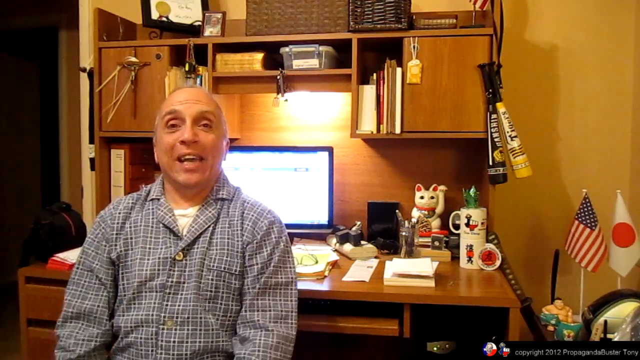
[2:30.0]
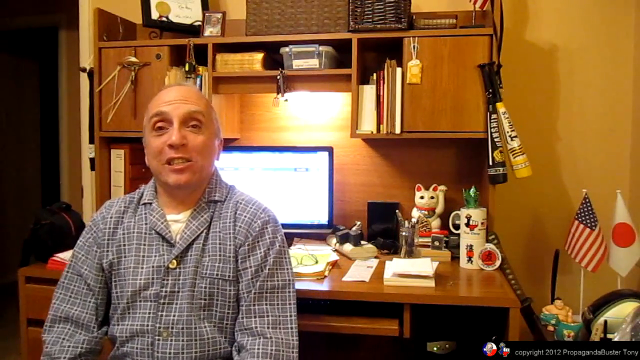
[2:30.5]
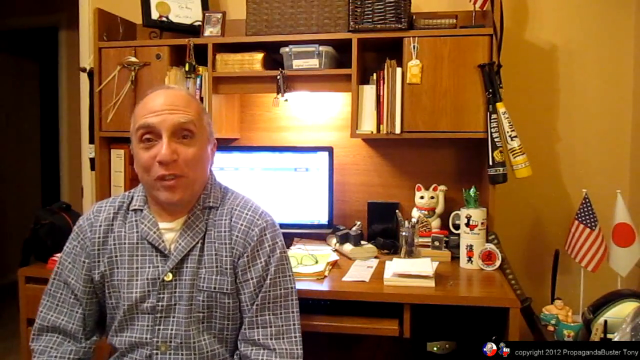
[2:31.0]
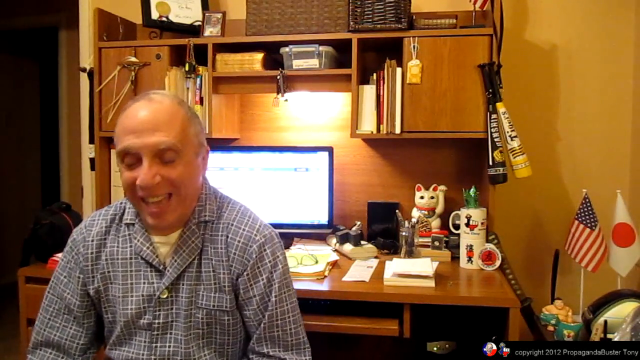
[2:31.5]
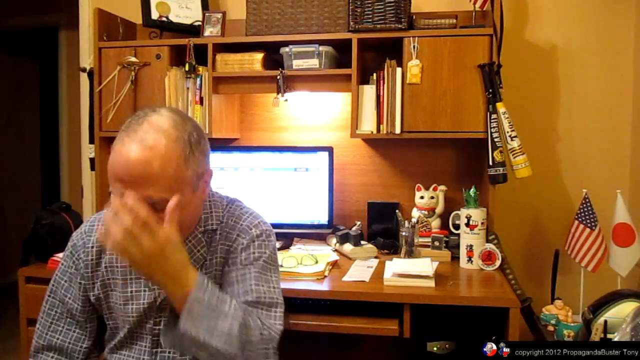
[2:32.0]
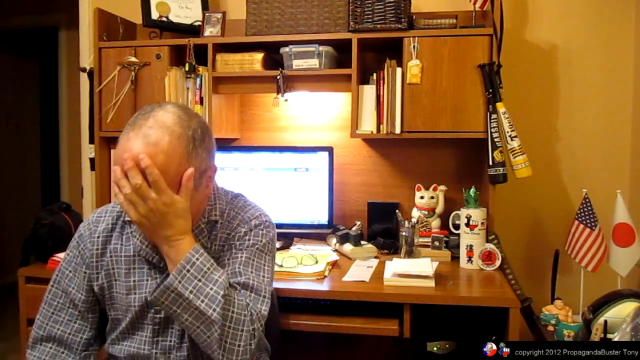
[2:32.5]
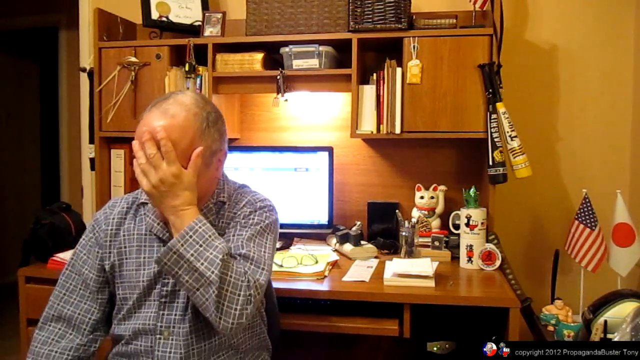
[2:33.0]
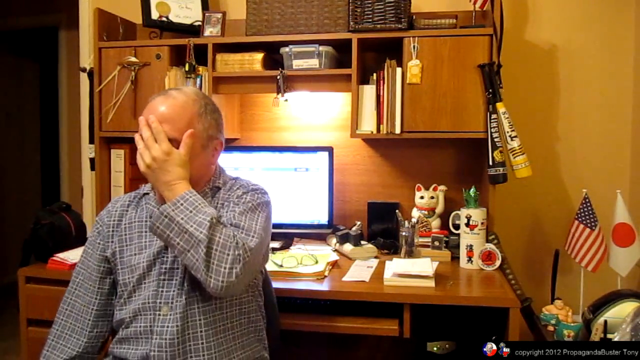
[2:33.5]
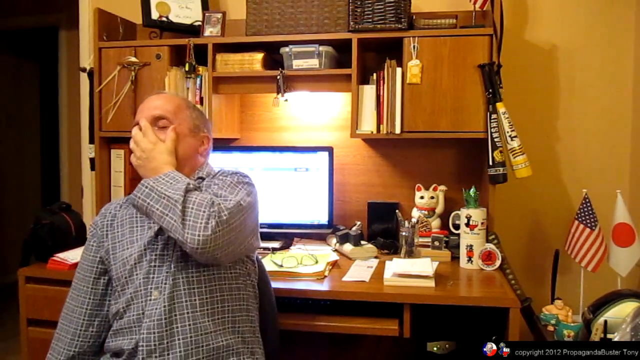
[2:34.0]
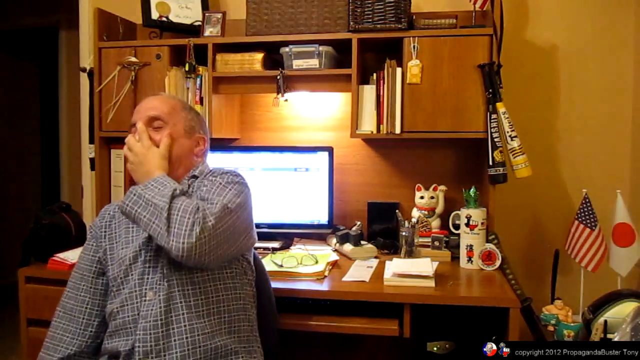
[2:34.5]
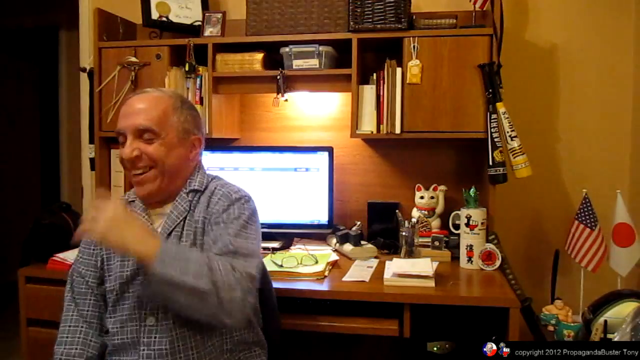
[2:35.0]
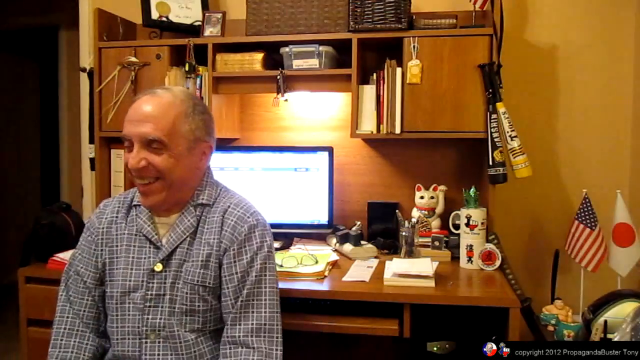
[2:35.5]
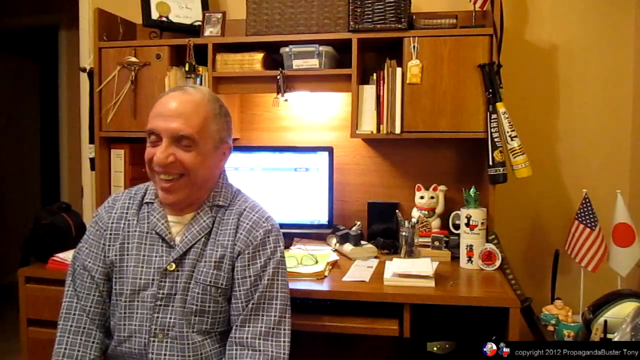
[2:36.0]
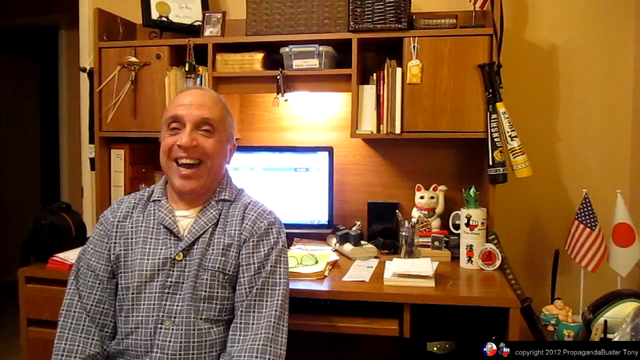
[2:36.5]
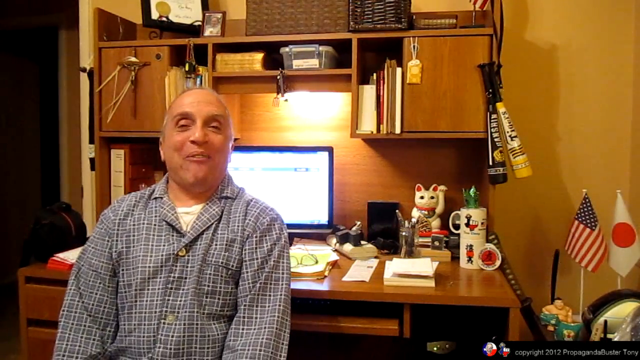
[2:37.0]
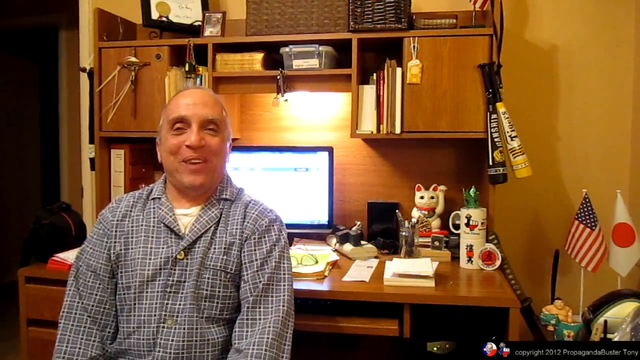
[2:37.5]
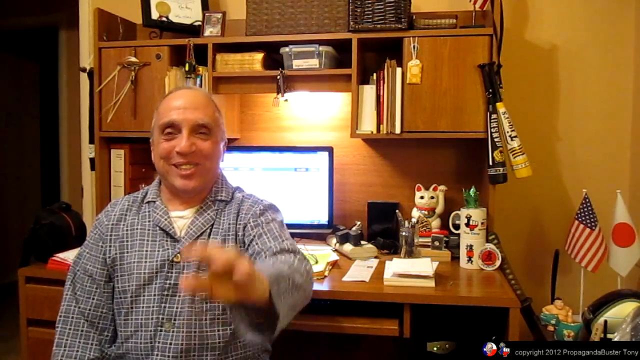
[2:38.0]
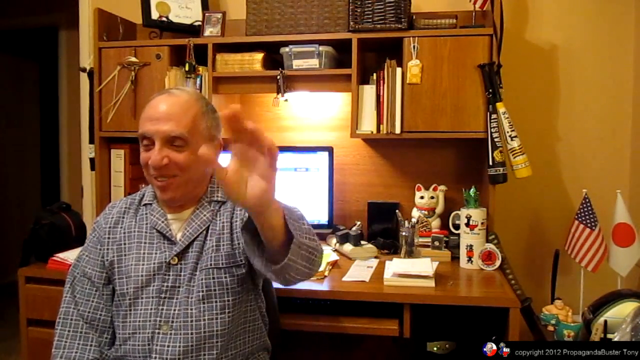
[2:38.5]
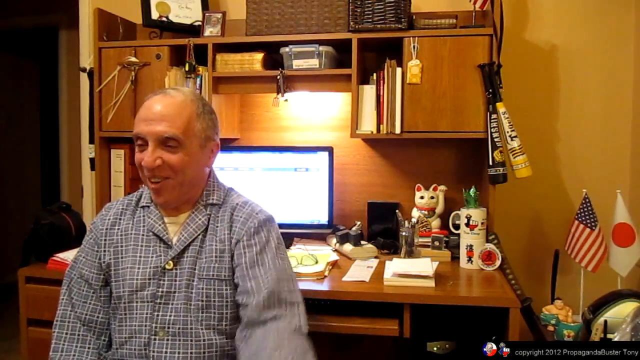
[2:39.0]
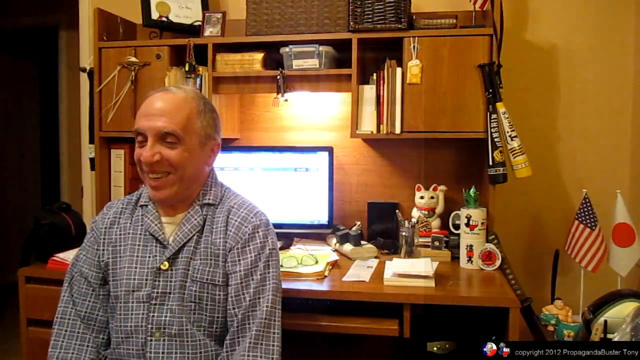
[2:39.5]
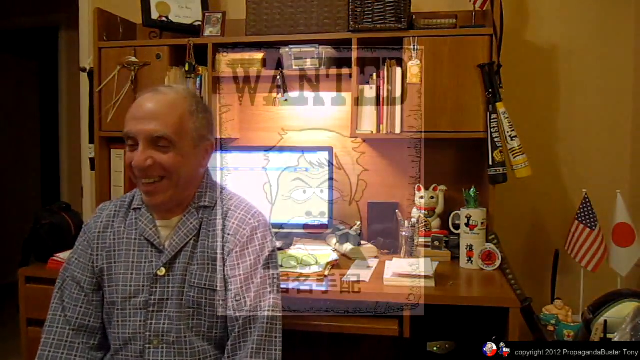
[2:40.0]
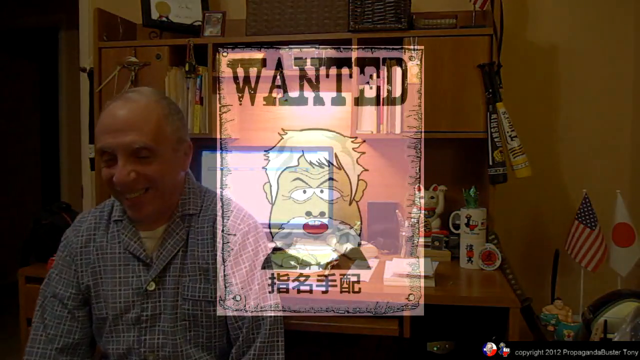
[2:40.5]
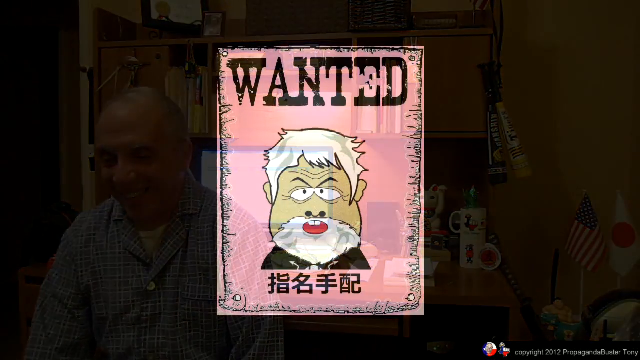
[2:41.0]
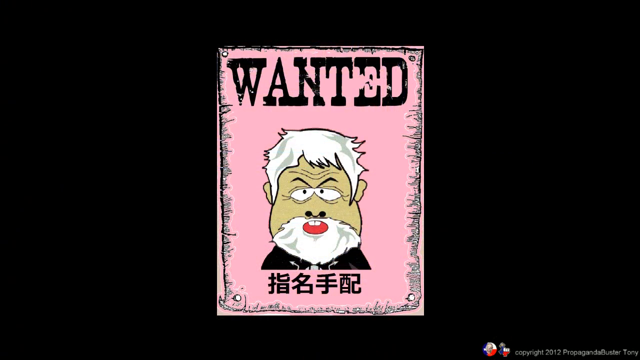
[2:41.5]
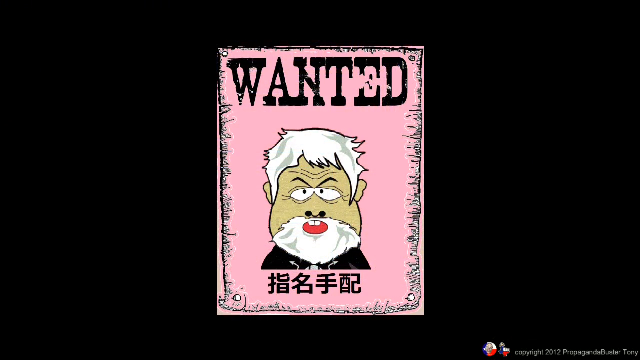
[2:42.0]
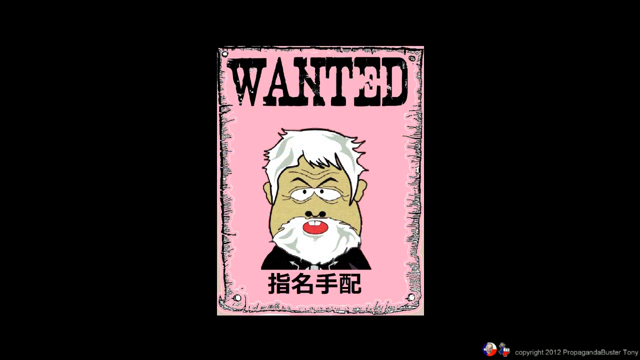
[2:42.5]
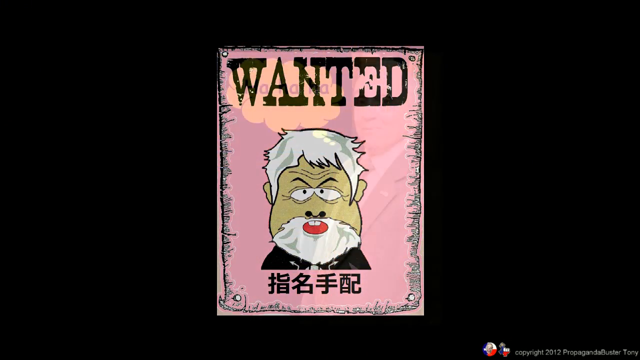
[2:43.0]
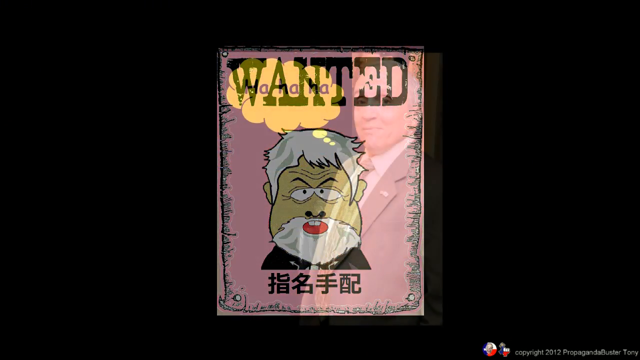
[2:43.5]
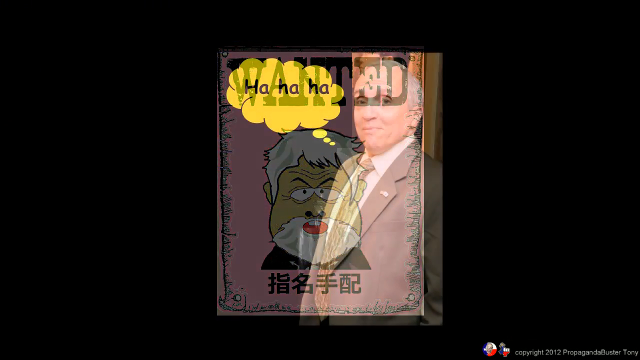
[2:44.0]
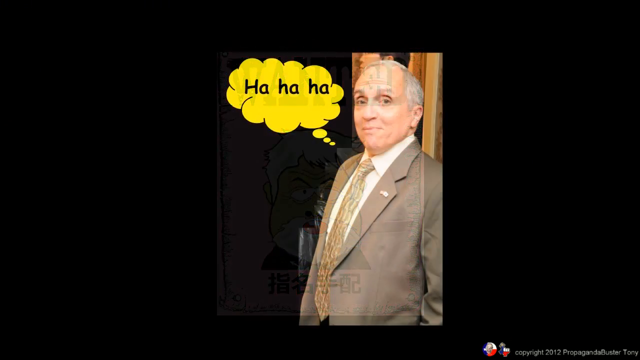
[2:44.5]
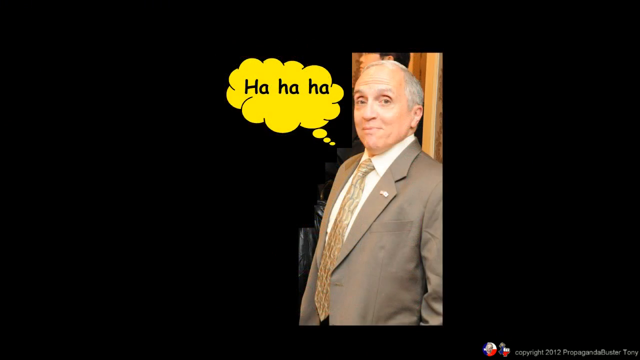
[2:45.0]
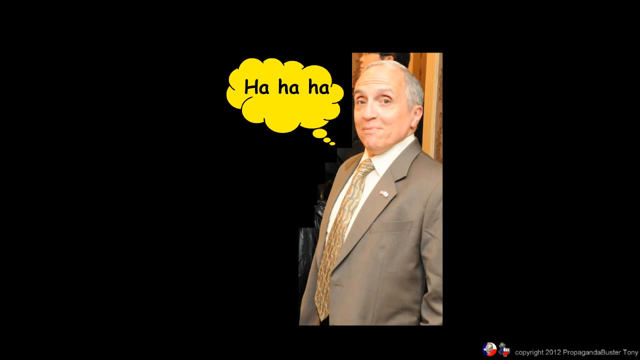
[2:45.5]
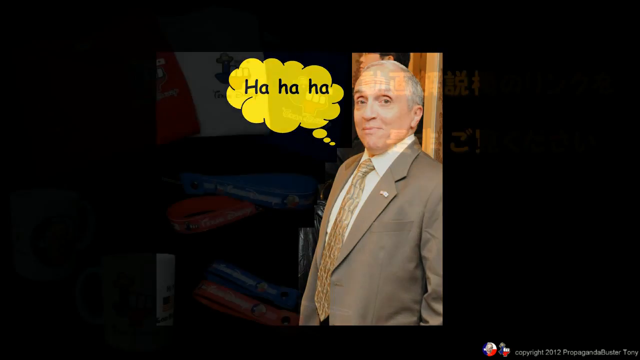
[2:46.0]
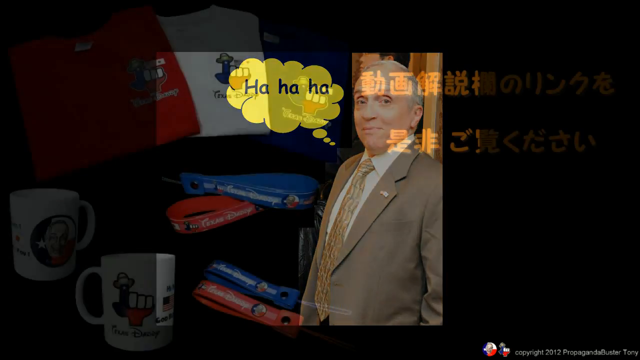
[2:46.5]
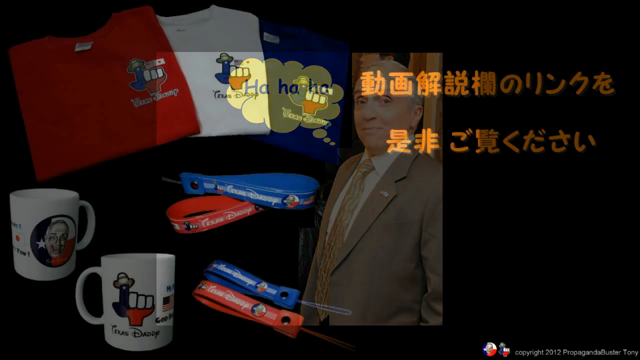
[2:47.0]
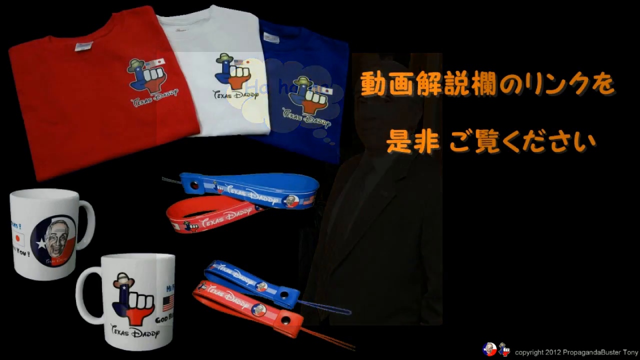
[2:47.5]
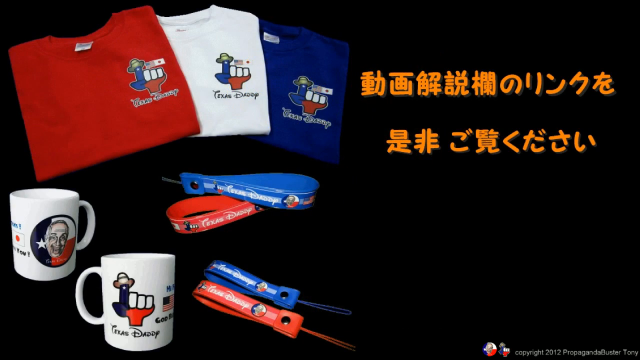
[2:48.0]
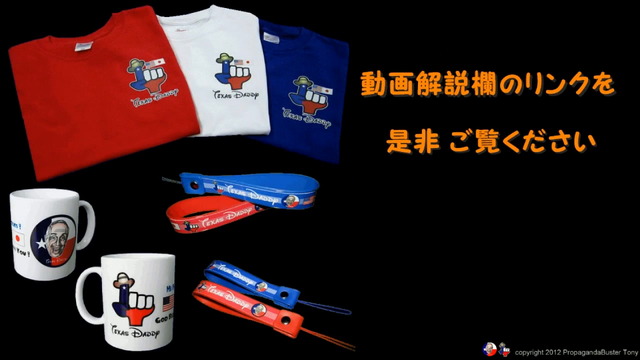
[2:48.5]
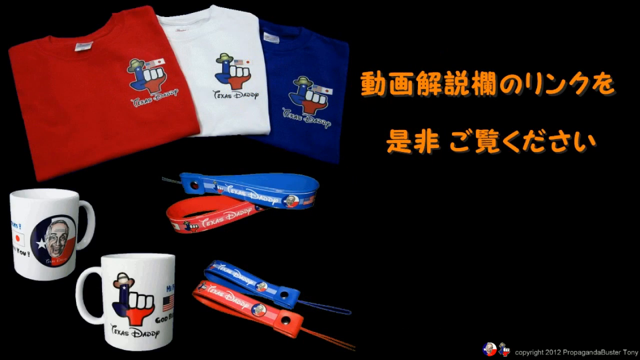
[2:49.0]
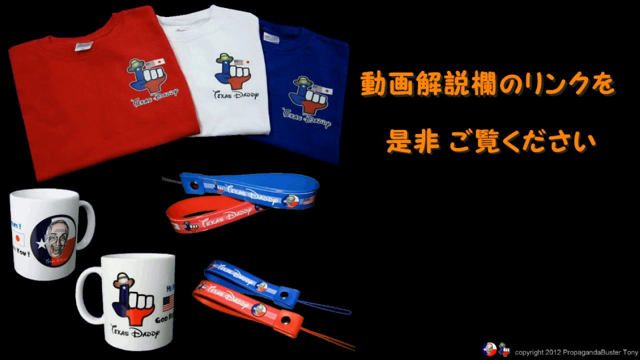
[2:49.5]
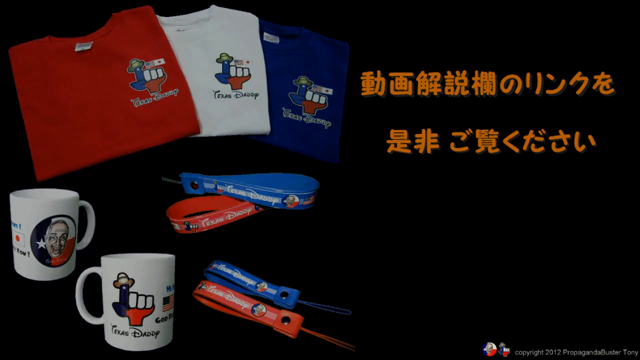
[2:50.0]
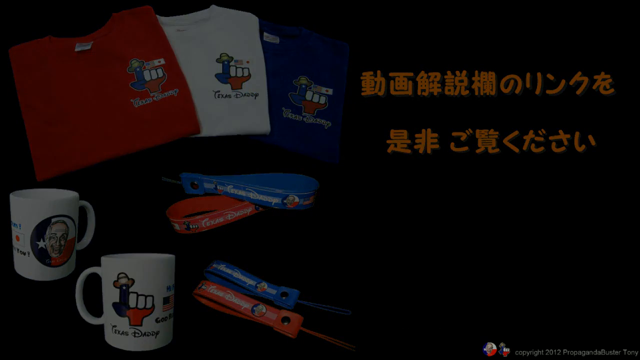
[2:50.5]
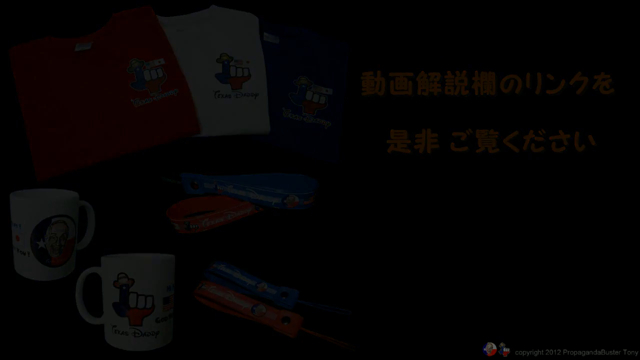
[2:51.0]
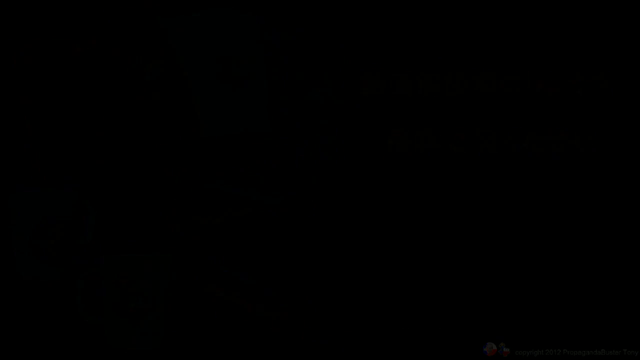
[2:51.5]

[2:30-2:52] The man is still making facial gestures, putting his hand to his face, rubbing down his face, laughing almost hysterically and waving at the camera. The image then transitions to a wanted poster with Asian lettering showing the white man with the beard, white hair and almost South Park-looking face from before. Next comes a drawing of the same man, the lawyer shown earlier, in a full beige executive suit with a tie, saying "ha ha" in a little text bubble. At the very end, more Asian characters appear with merchandise that almost looks like shirts, little collar-type things, and mugs with Asian lettering.